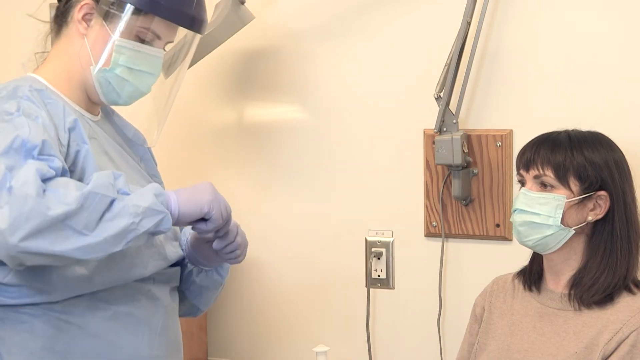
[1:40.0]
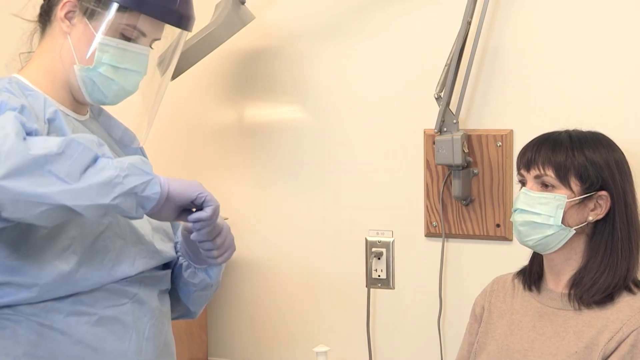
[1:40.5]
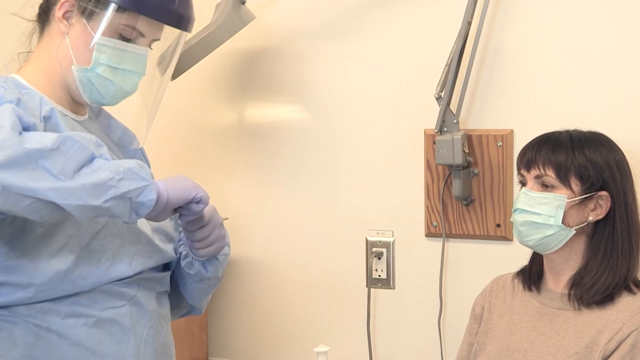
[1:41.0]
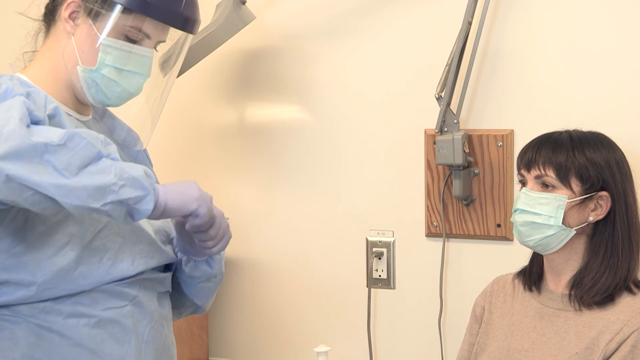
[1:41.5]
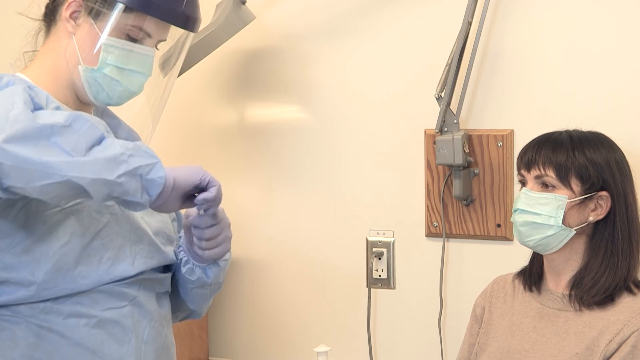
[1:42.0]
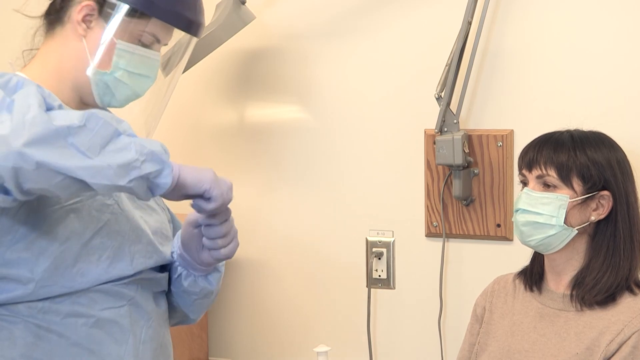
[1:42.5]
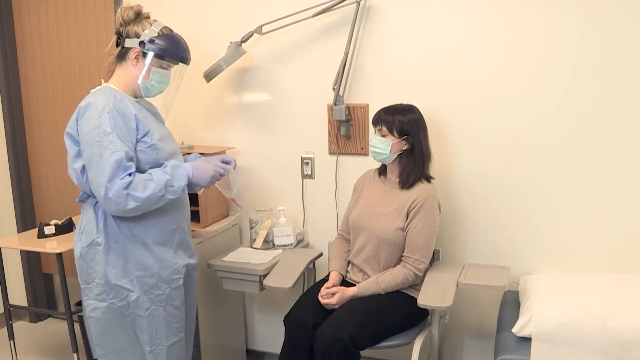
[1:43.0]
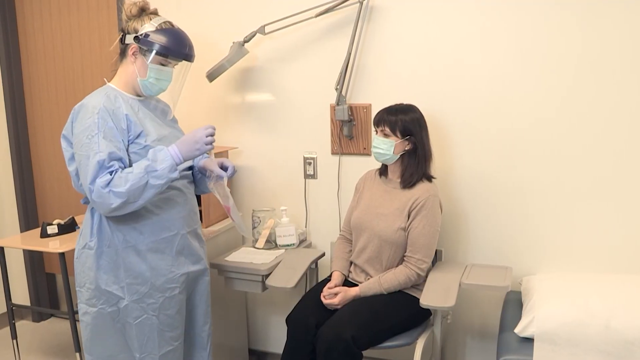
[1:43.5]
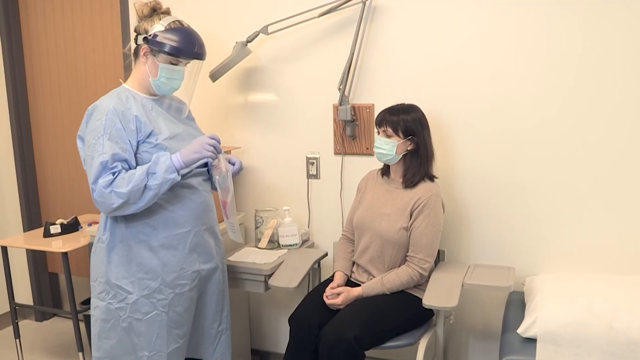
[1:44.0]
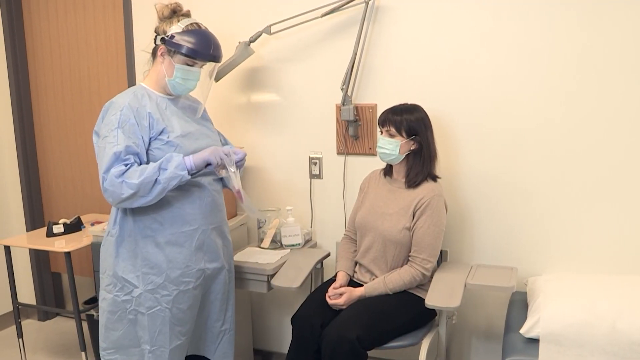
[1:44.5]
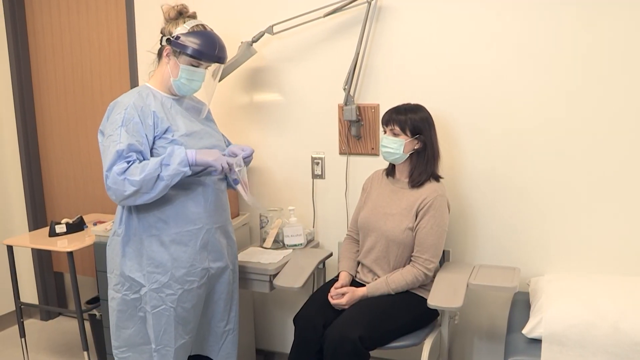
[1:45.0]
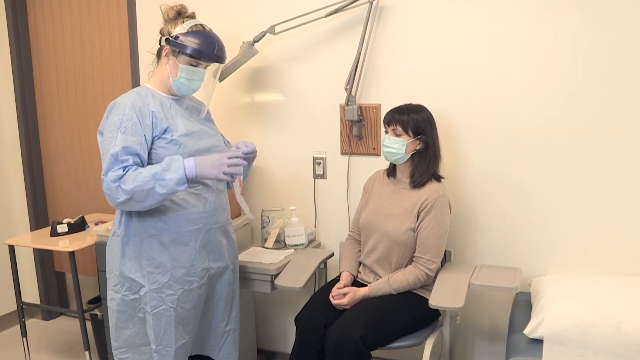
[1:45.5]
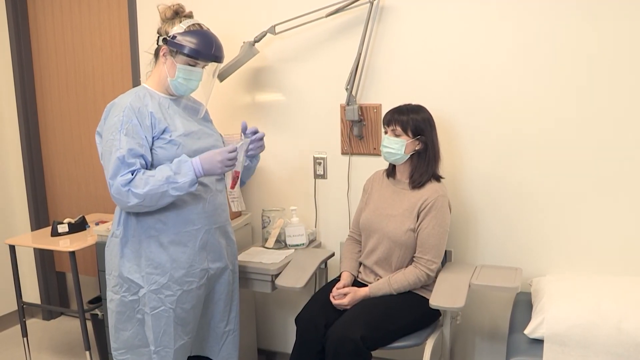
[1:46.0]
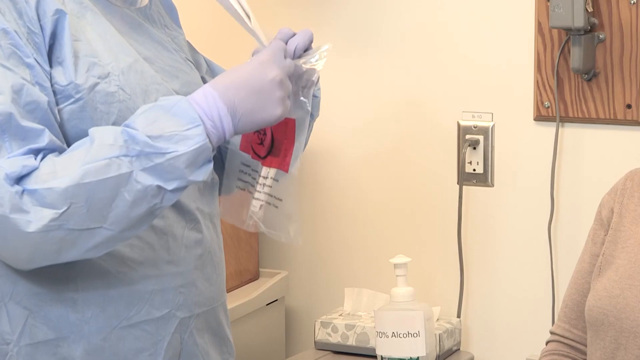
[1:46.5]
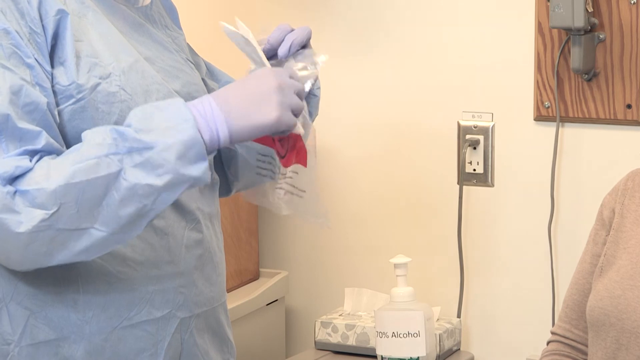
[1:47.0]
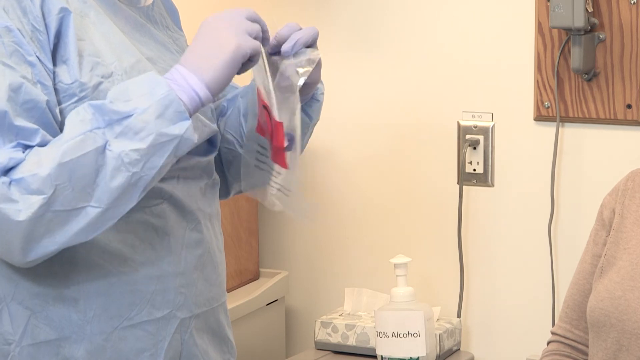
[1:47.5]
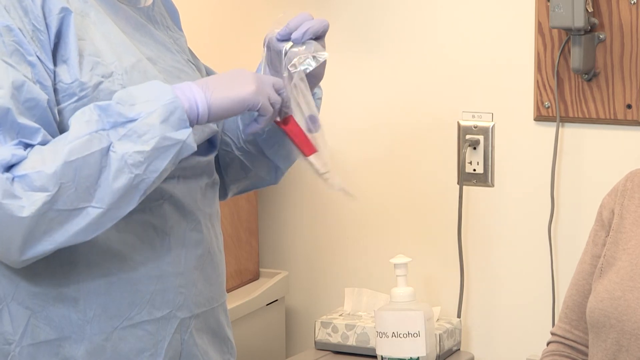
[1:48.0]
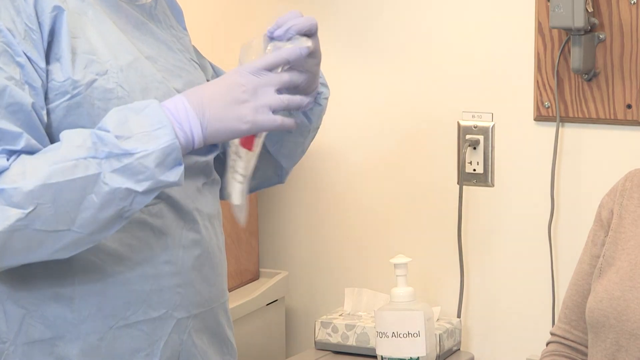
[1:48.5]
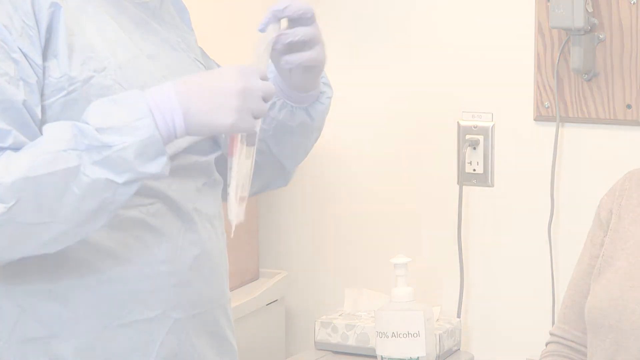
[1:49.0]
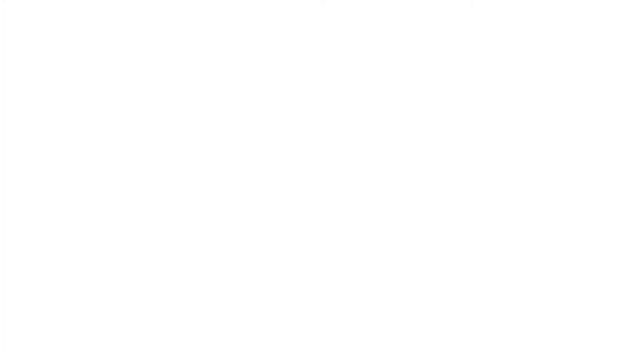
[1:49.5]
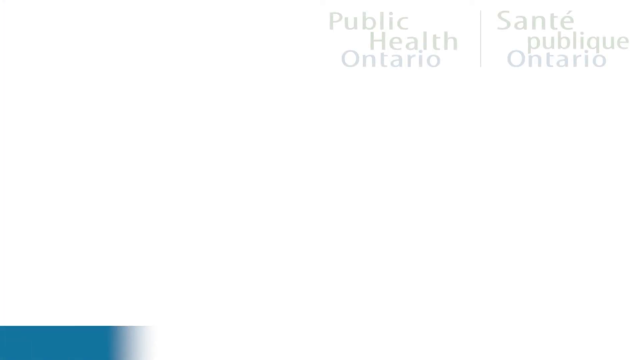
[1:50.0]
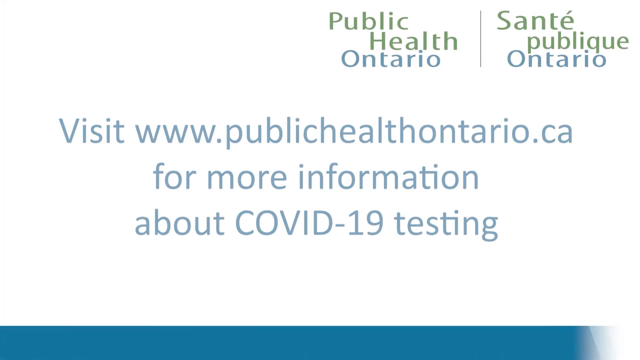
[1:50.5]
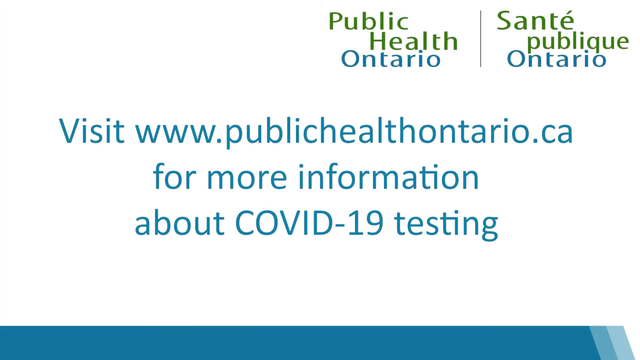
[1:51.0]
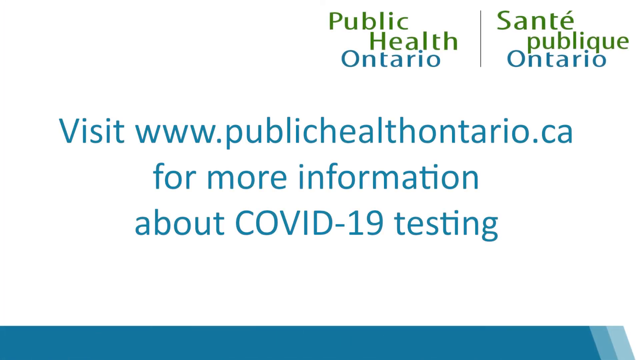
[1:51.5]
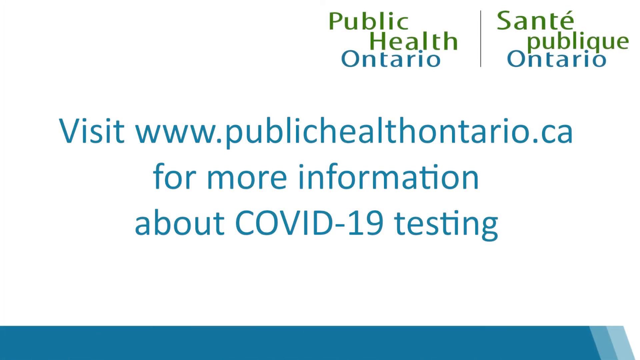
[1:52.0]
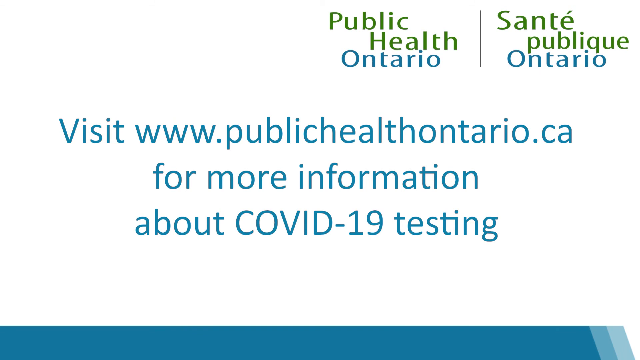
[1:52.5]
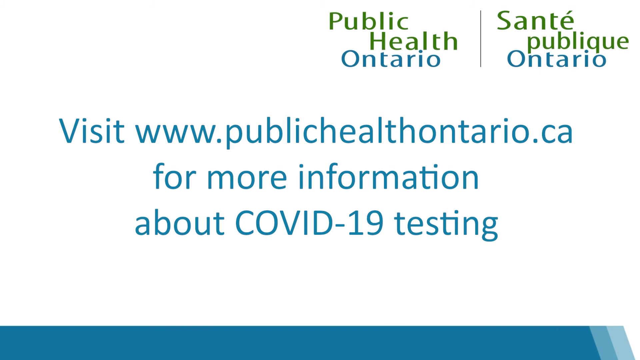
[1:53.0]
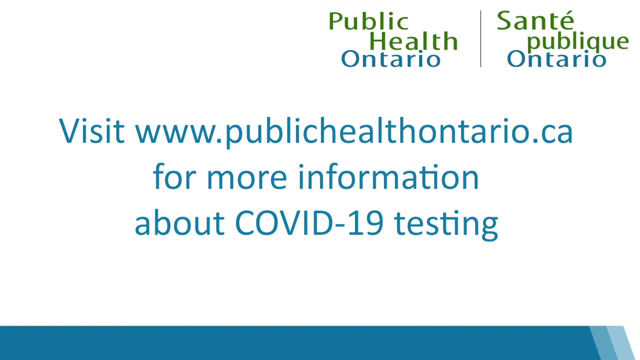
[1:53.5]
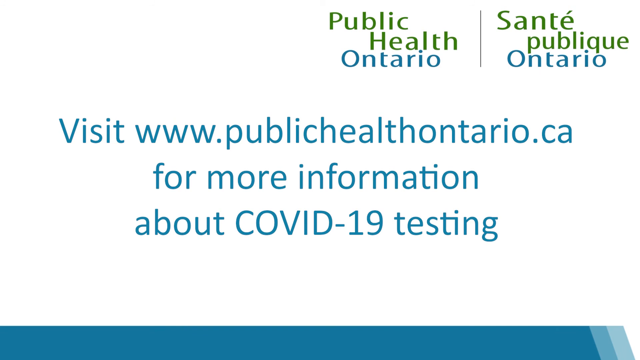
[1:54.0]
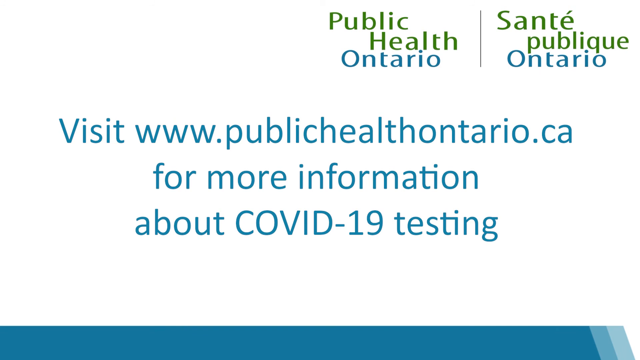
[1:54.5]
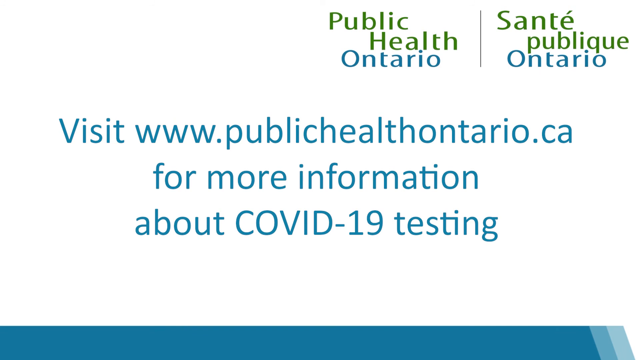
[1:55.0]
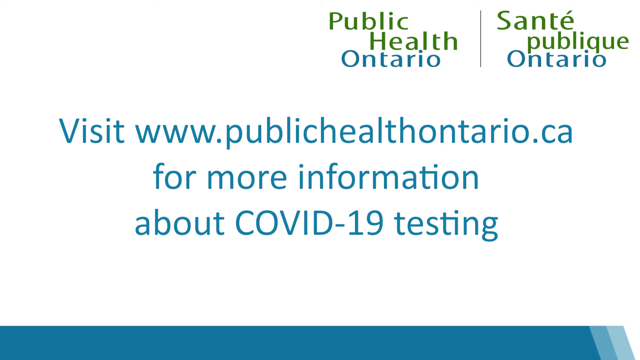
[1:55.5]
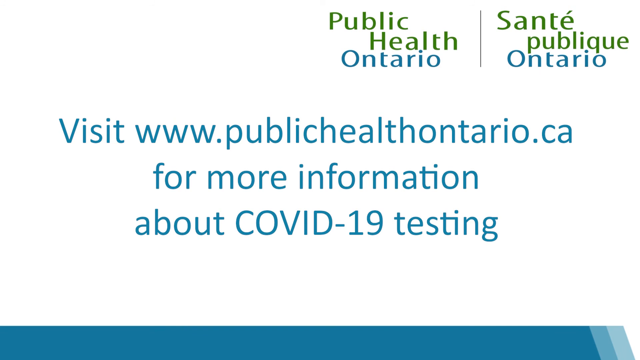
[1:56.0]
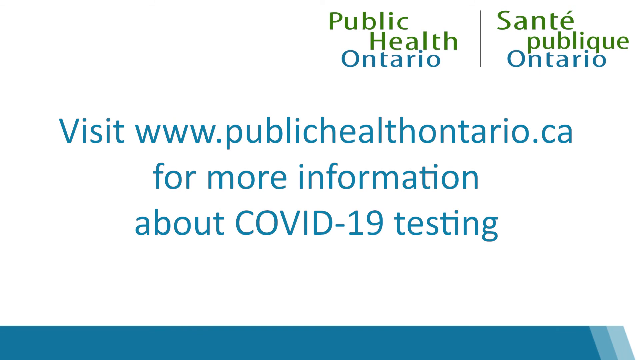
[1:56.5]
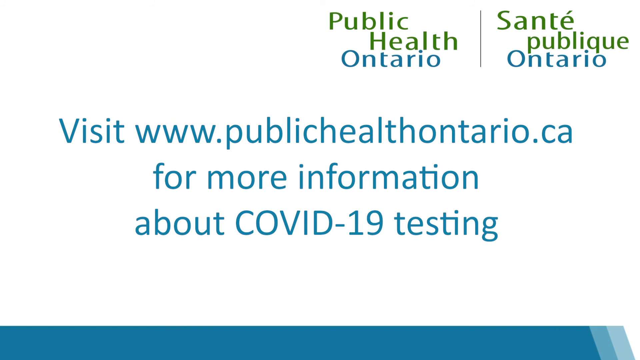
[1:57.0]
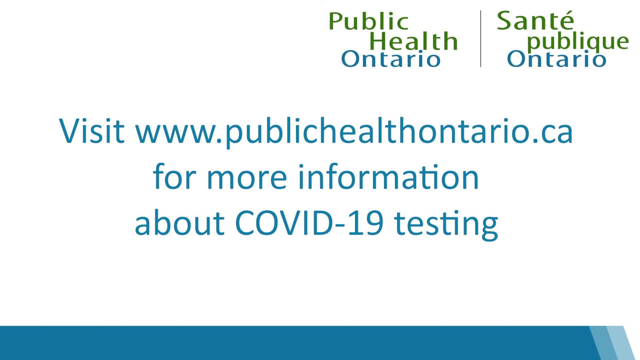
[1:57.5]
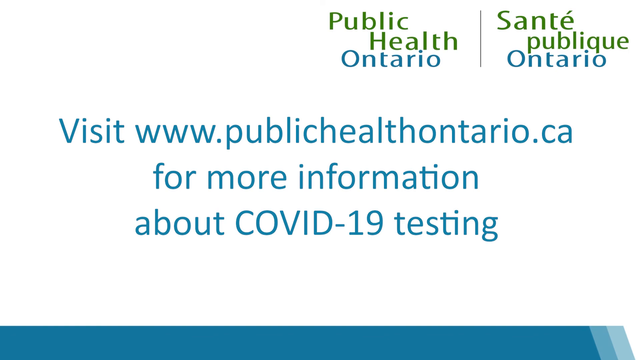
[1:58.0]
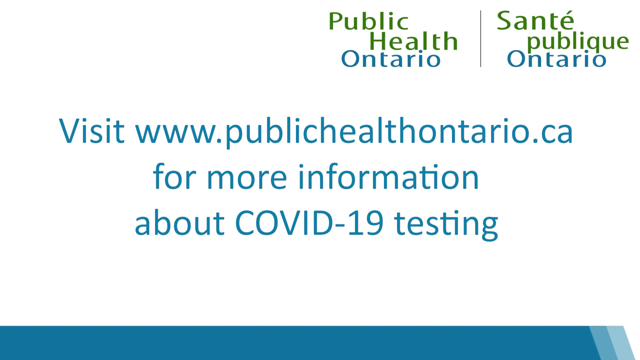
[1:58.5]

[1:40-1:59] She twists the tube, gets the specimen bag, and places the vial inside it. The seated woman sits watching her complete all of this. She also puts a folded piece of paper inside the bag. The video then goes to a white screen, back to the opening screen: "Public Health Ontario" in the upper right-hand corner, the line in the middle, and "Santé Publique Ontario," with blue letters in the middle of the screen reading "visit www.publichealthontario.ca for more information." There is a blue bar at the bottom.